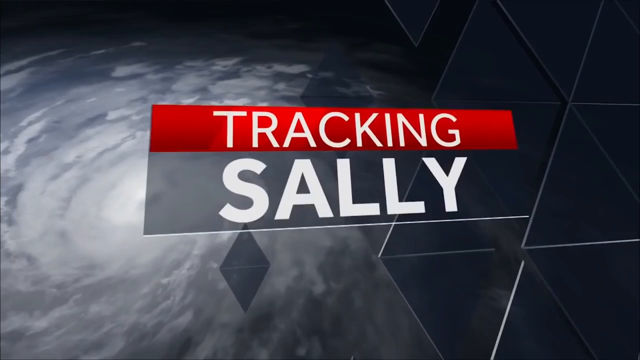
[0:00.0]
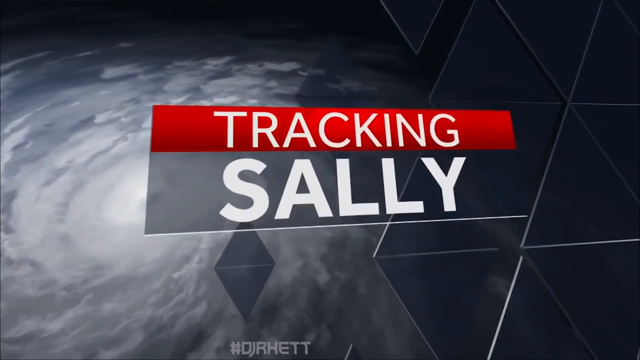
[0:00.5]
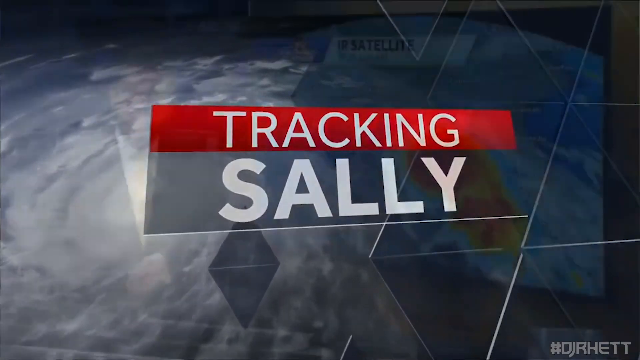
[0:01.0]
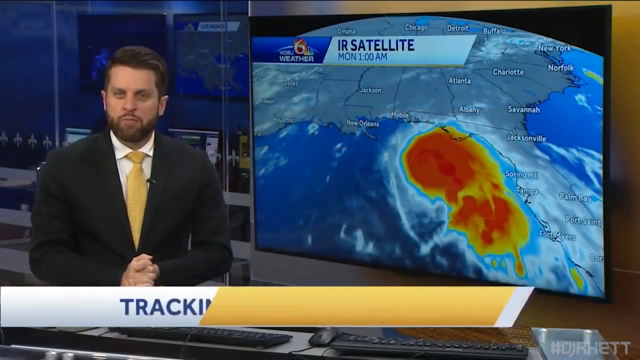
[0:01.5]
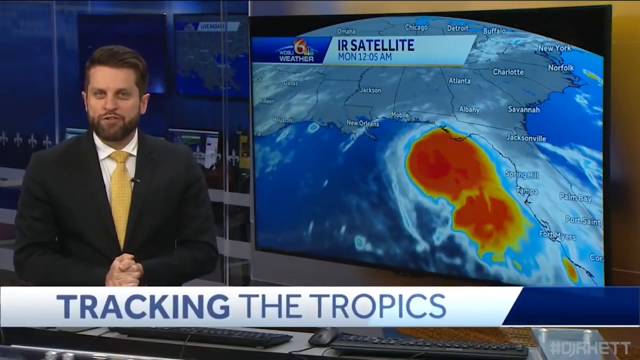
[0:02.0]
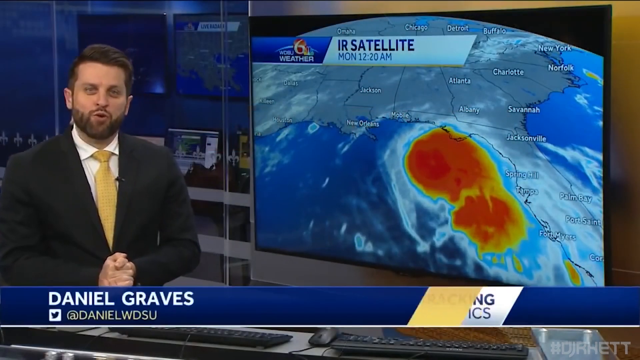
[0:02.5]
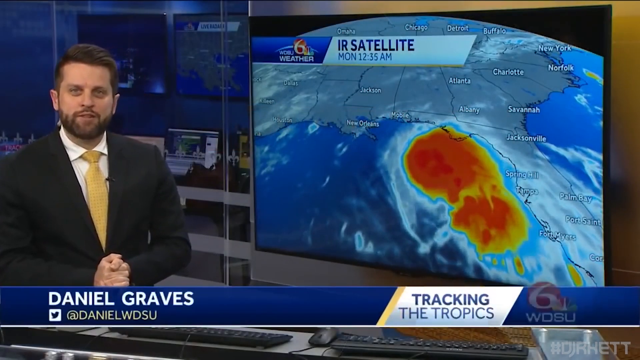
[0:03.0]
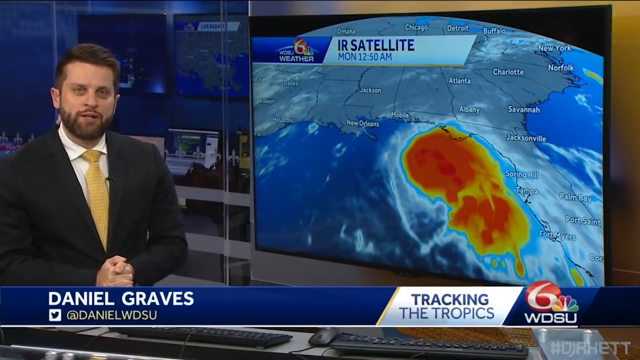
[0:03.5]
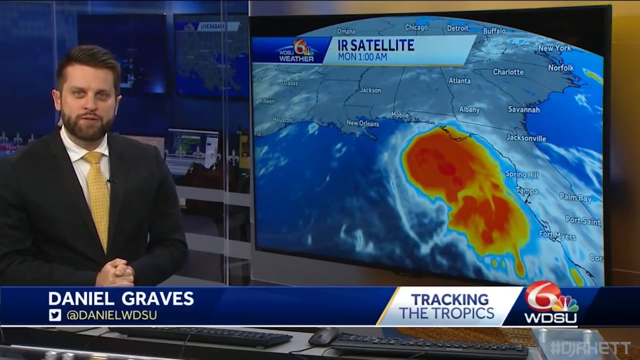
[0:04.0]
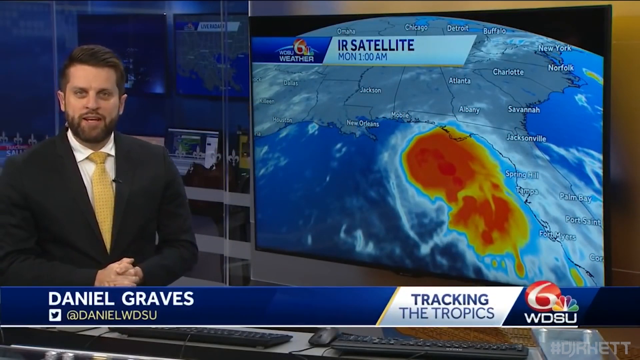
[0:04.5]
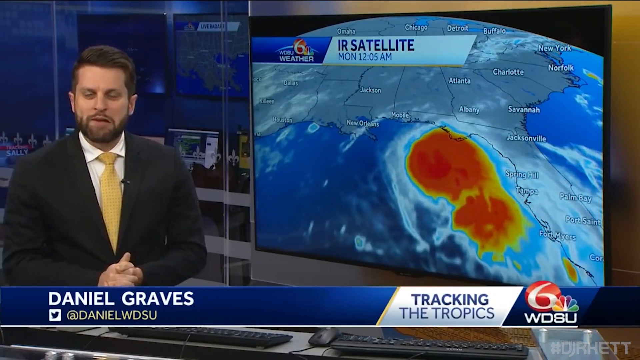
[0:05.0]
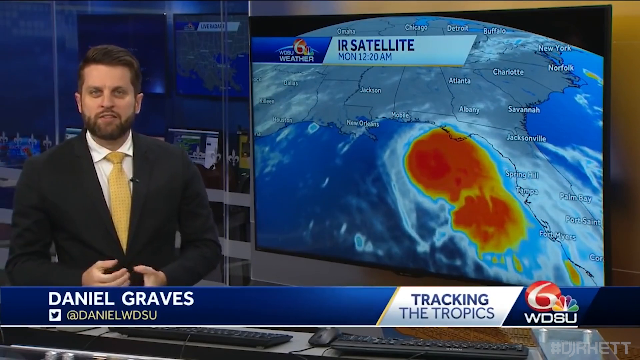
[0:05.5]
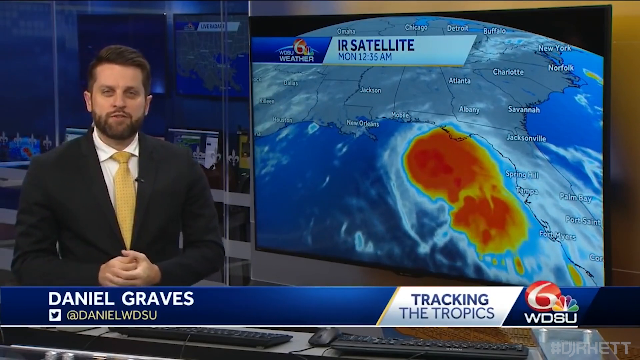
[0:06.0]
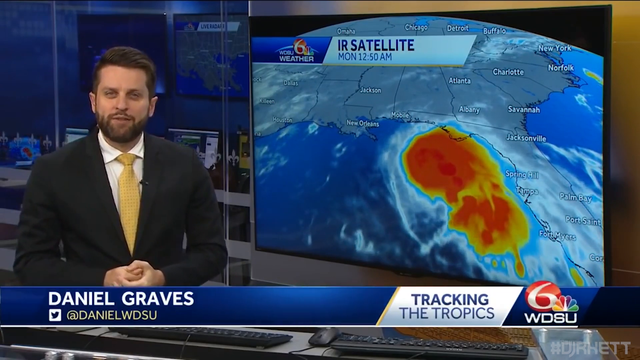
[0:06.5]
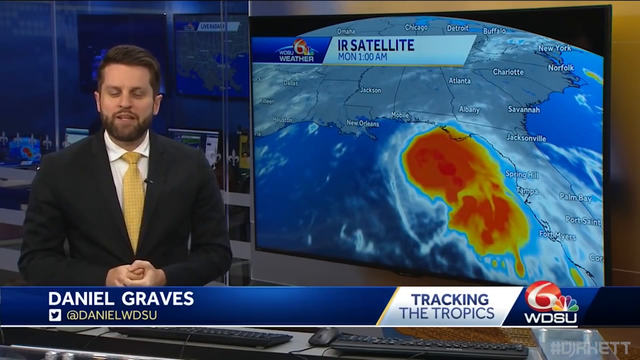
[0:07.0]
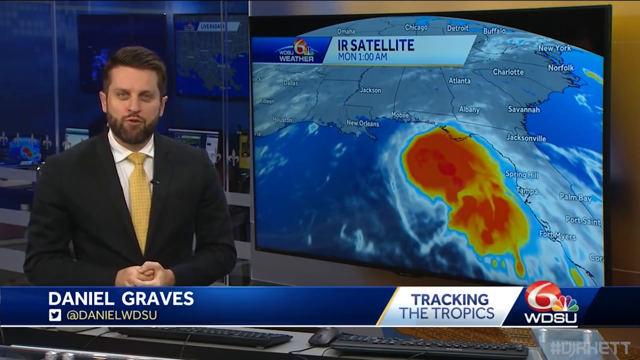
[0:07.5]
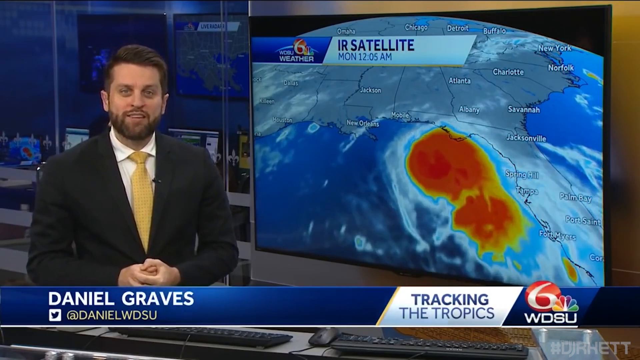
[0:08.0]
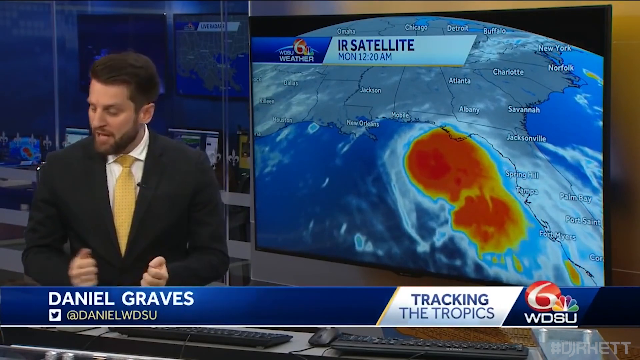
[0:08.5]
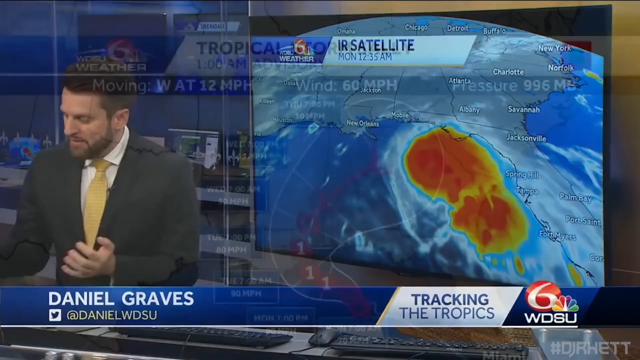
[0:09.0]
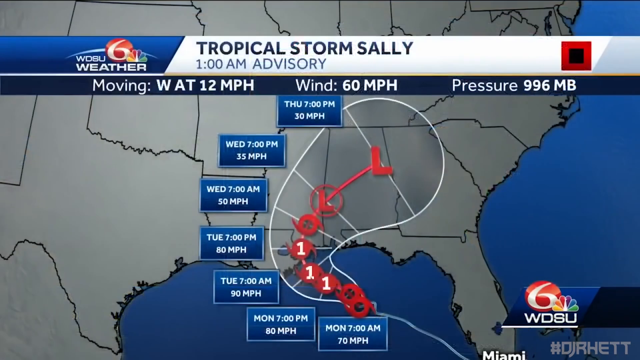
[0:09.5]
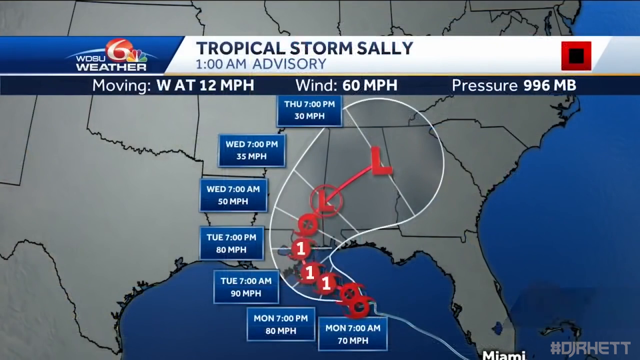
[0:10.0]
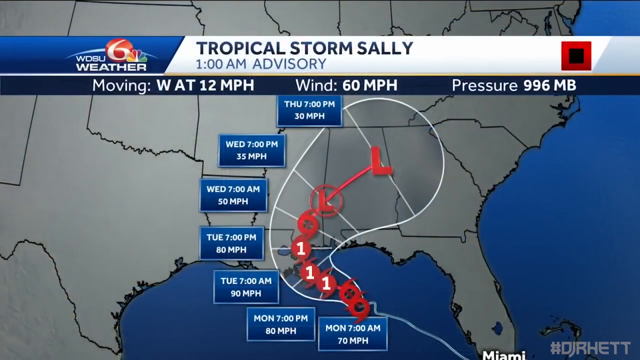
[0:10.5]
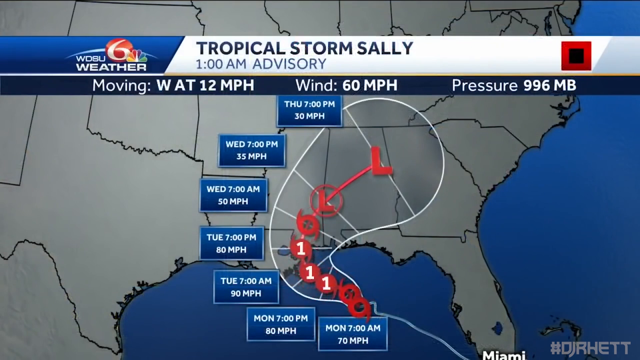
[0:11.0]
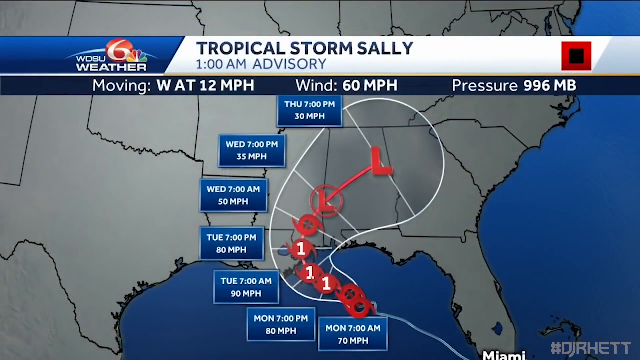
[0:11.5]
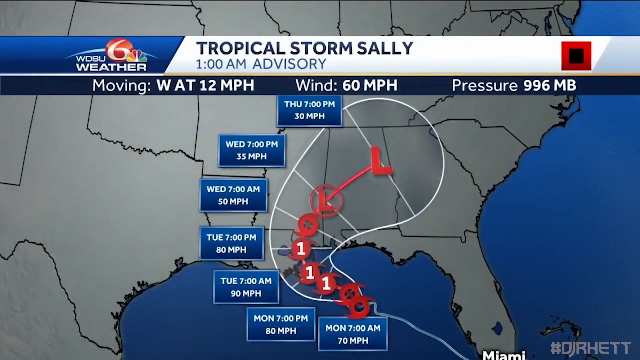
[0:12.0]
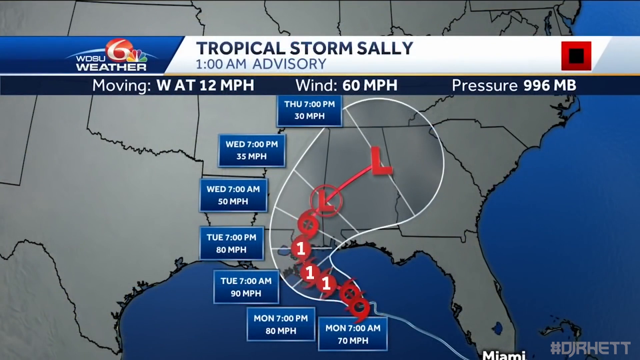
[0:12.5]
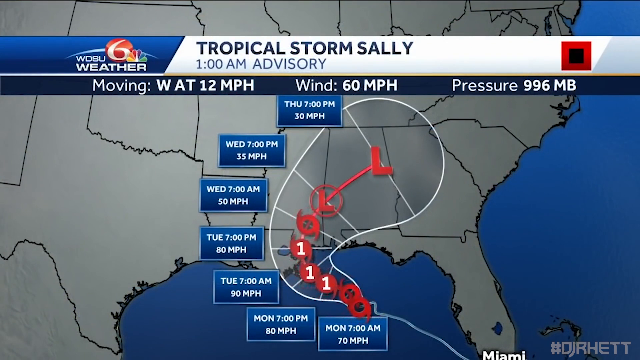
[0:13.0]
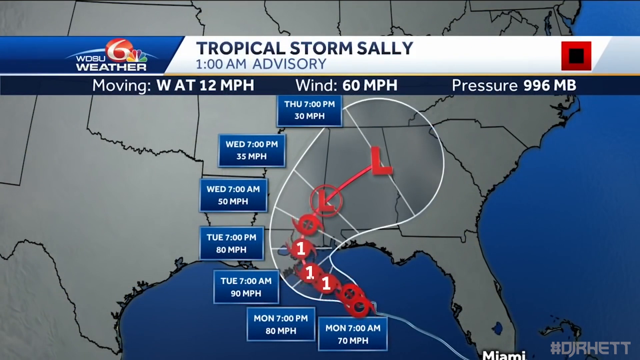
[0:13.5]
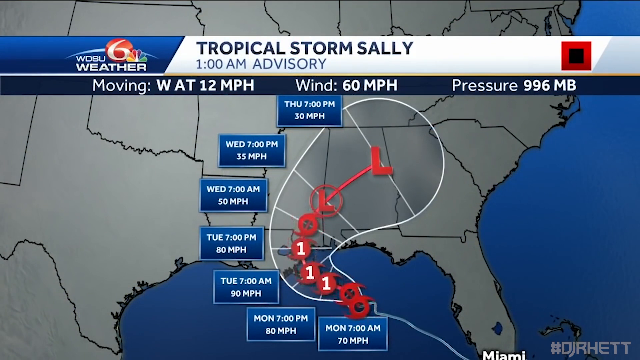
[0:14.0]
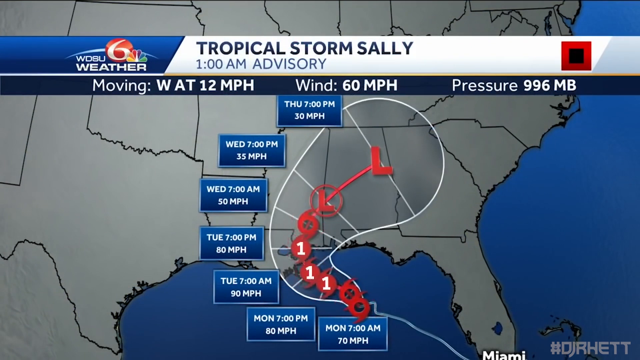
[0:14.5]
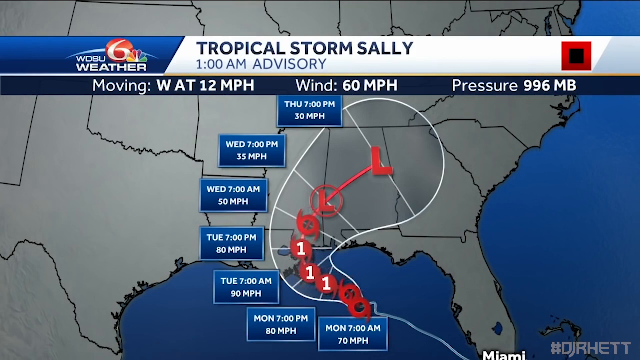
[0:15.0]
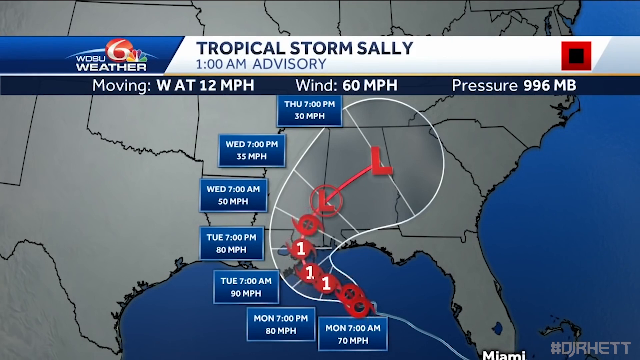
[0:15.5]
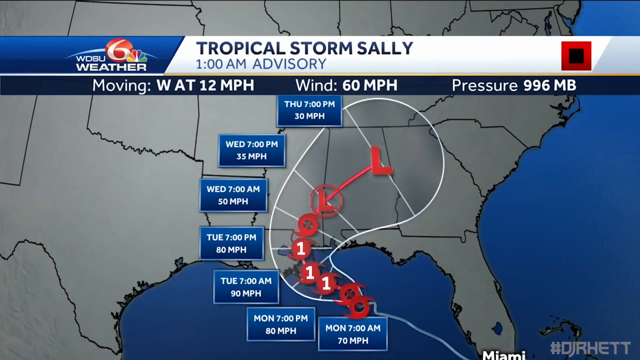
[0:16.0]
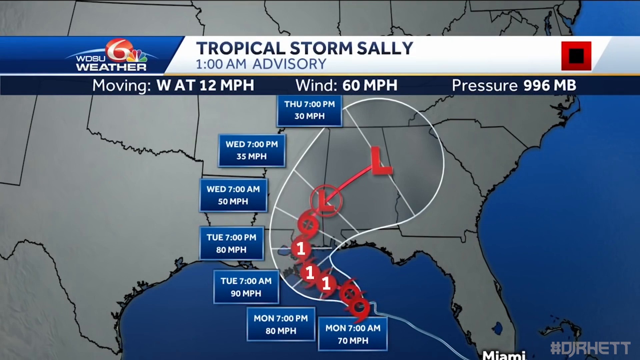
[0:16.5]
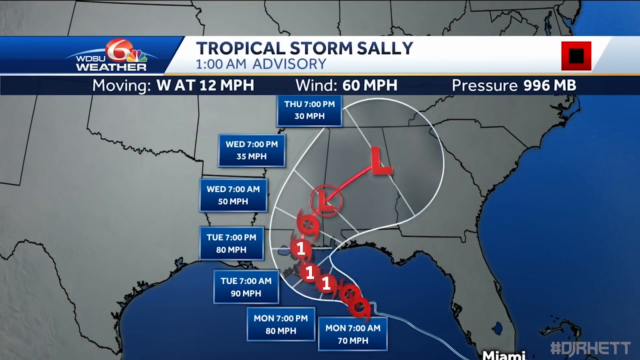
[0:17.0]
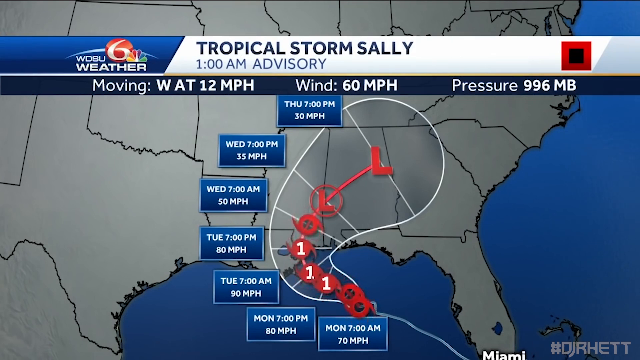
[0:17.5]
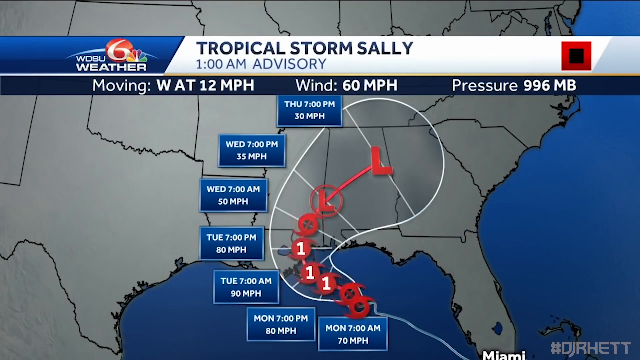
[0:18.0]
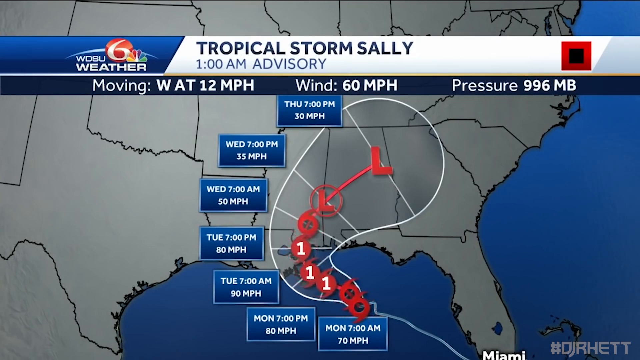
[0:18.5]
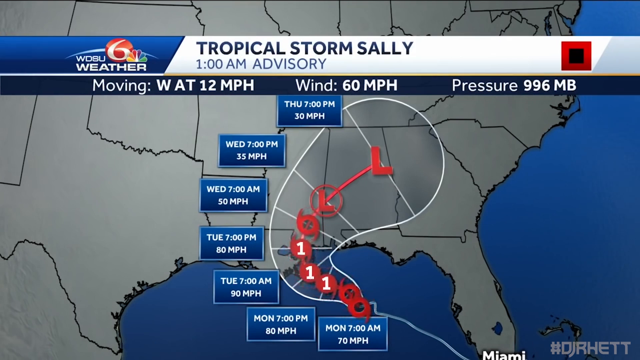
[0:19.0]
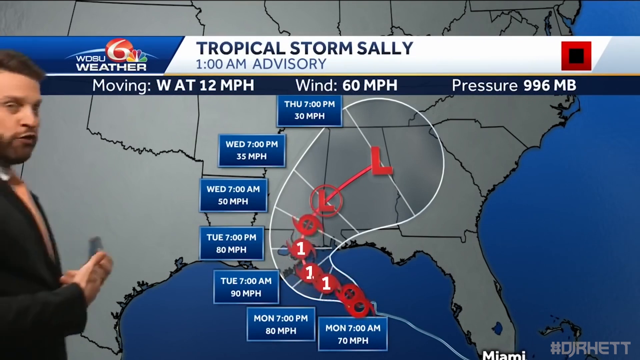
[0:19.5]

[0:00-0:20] A weather report tracks Hurricane Sally. The reporter is Daniel Graves of WDSU. He looks at a satellite image of a large mass with red and orange coloration moving toward Florida. On-screen text reads "tracking the tropic" and "News Channel 6", and a map shows the path of the hurricane, with 60 mile per hour winds, headed toward Louisiana and Georgia and apparently Alabama and parts of Tennessee. The storm is massive. A timeline shows when it will hit certain areas over the next few days.